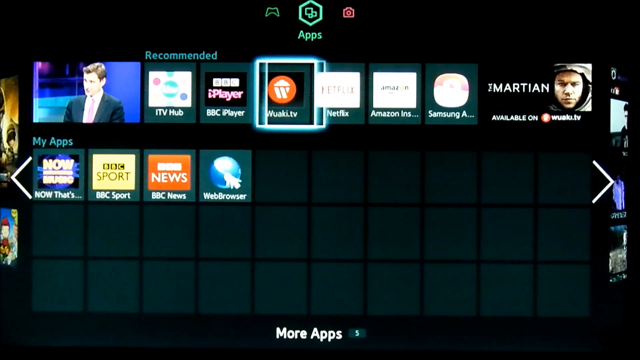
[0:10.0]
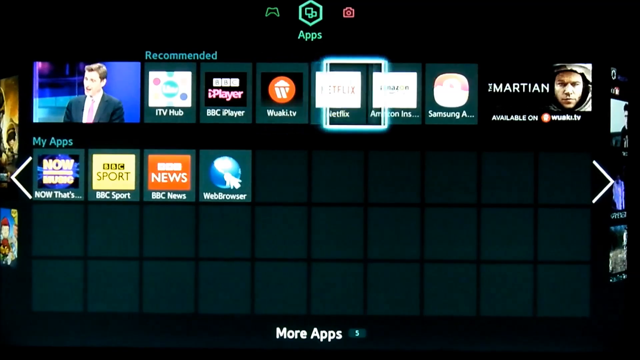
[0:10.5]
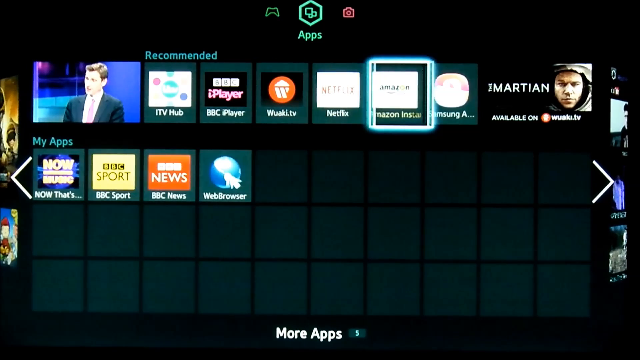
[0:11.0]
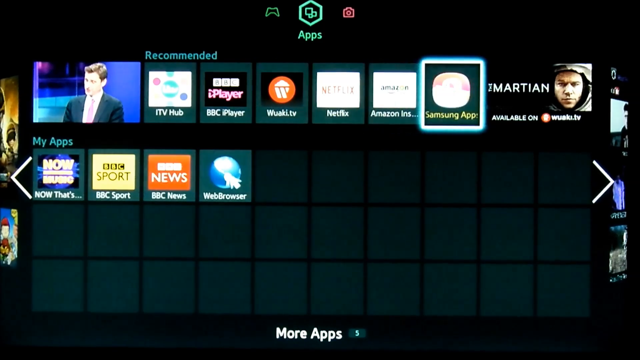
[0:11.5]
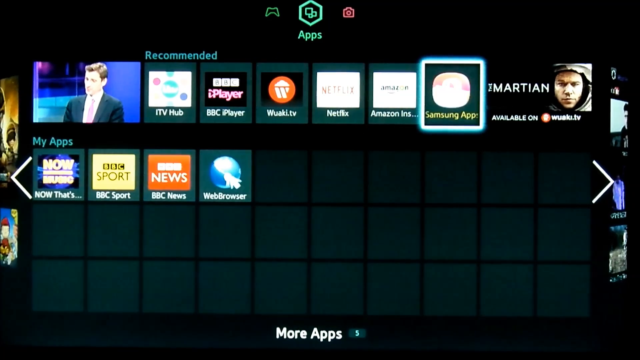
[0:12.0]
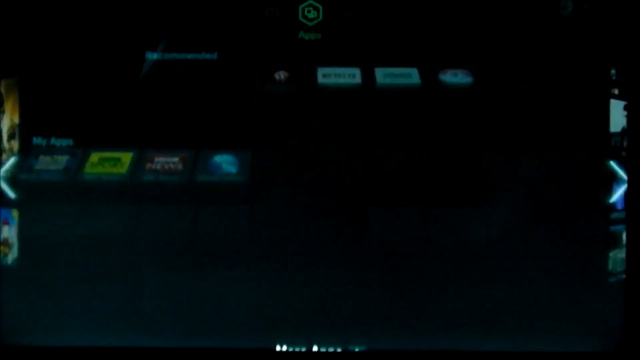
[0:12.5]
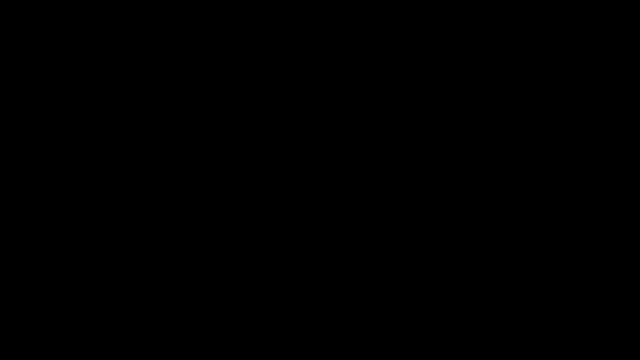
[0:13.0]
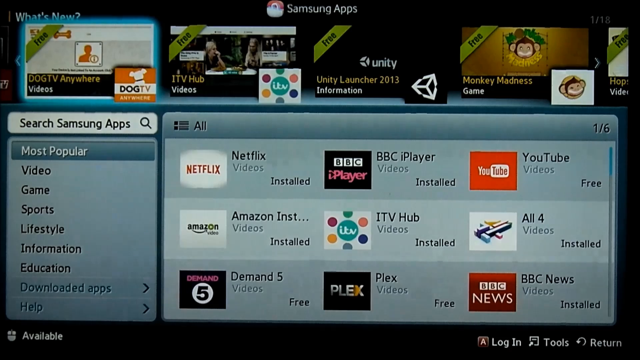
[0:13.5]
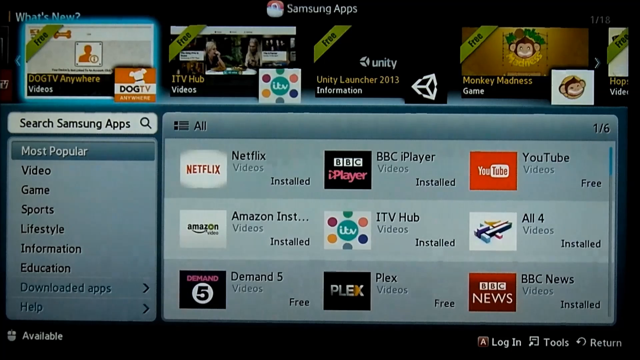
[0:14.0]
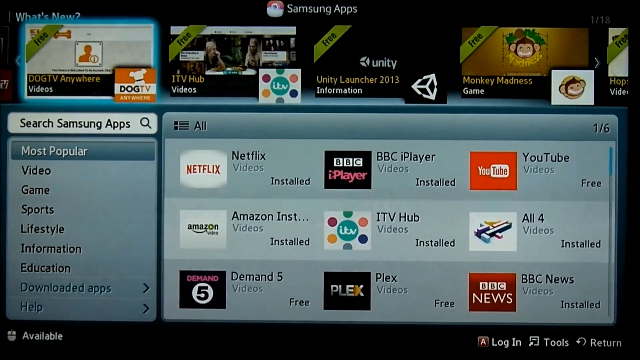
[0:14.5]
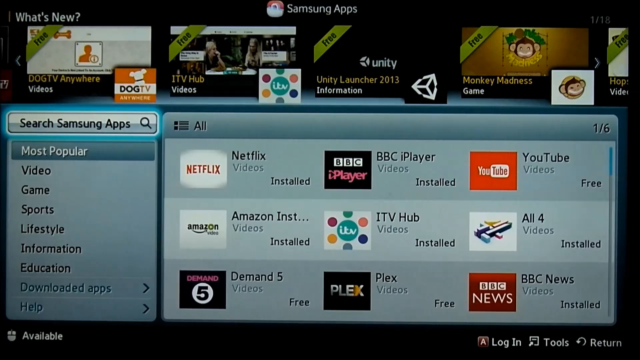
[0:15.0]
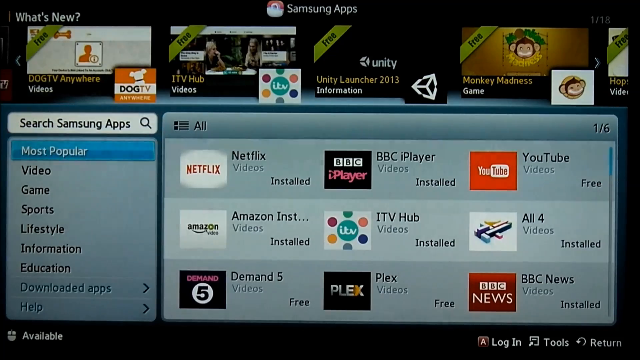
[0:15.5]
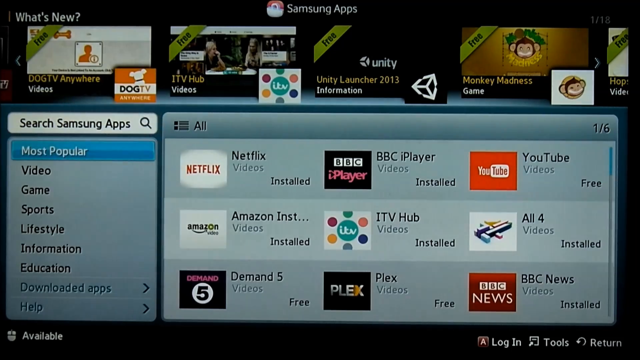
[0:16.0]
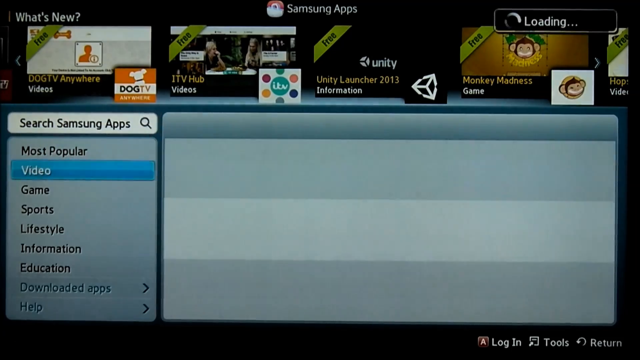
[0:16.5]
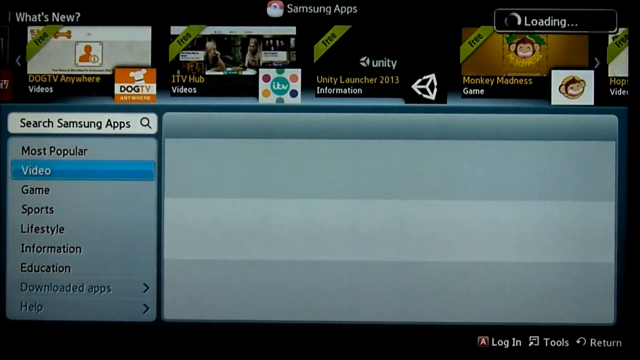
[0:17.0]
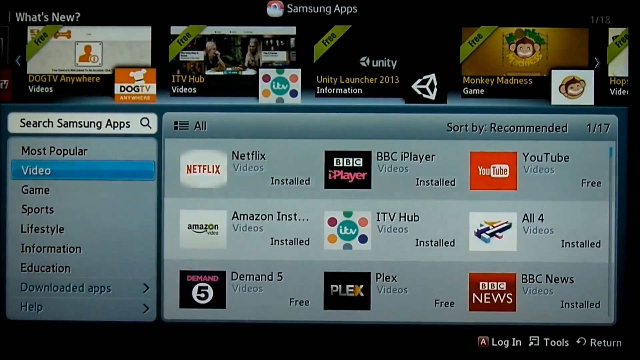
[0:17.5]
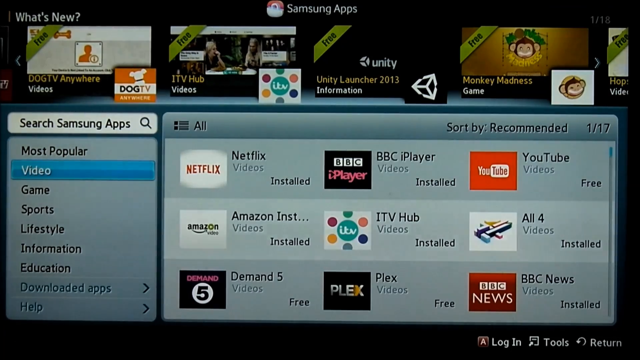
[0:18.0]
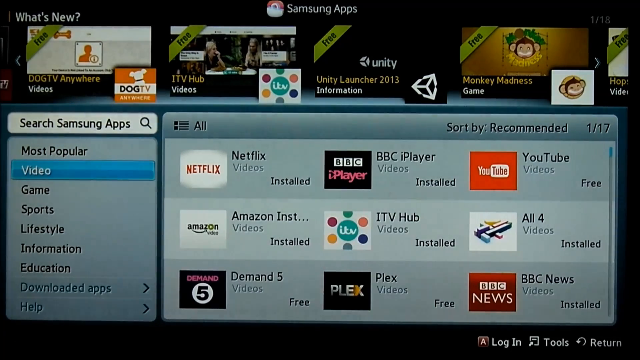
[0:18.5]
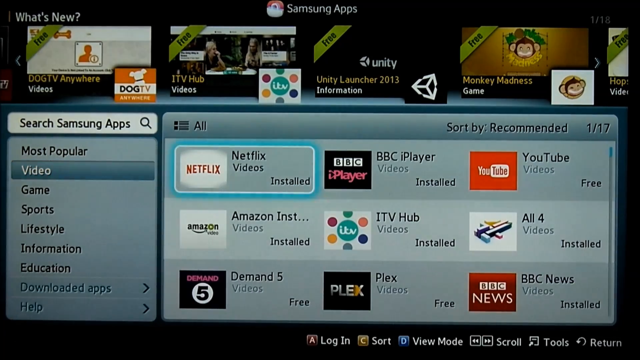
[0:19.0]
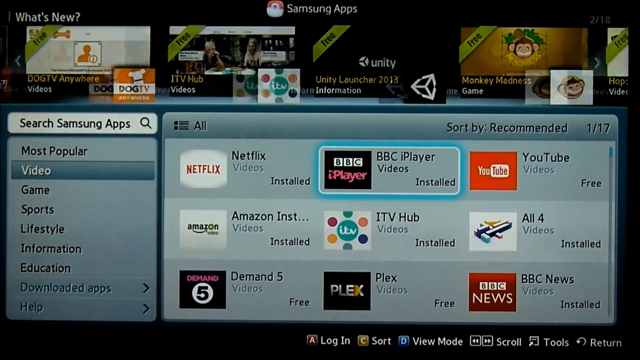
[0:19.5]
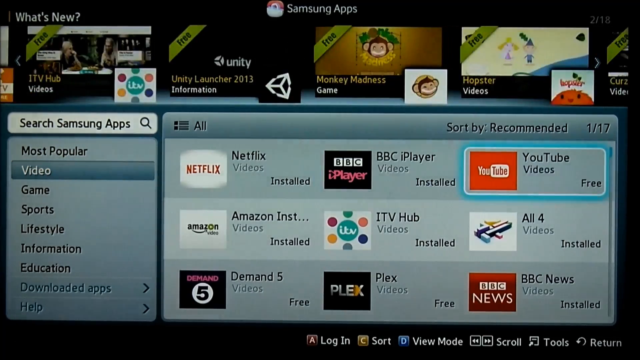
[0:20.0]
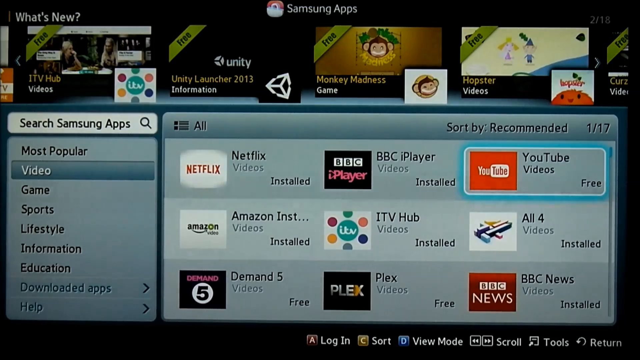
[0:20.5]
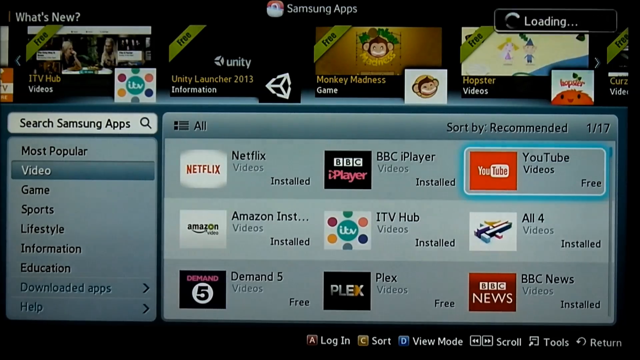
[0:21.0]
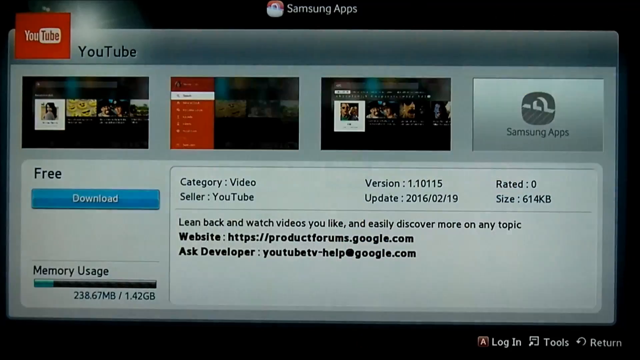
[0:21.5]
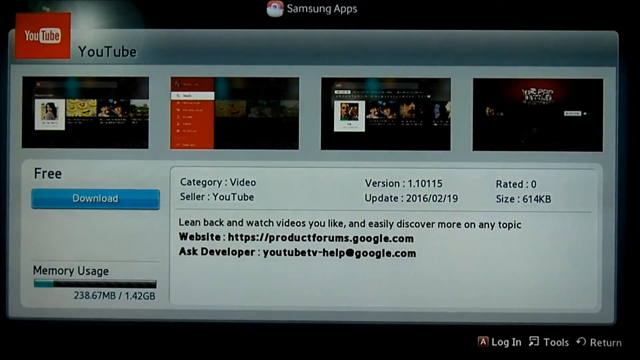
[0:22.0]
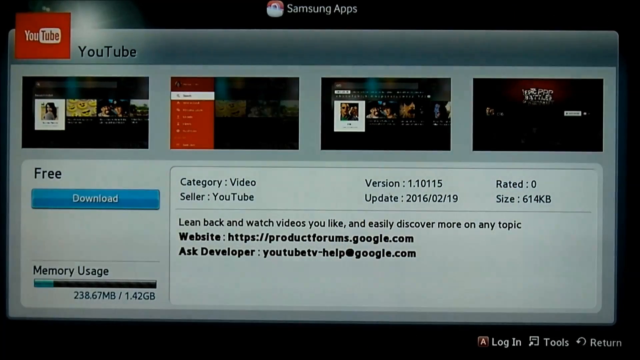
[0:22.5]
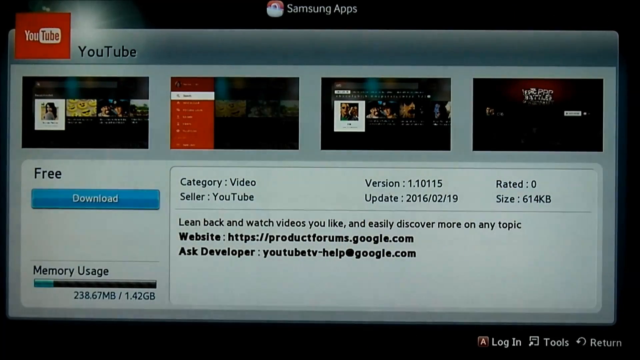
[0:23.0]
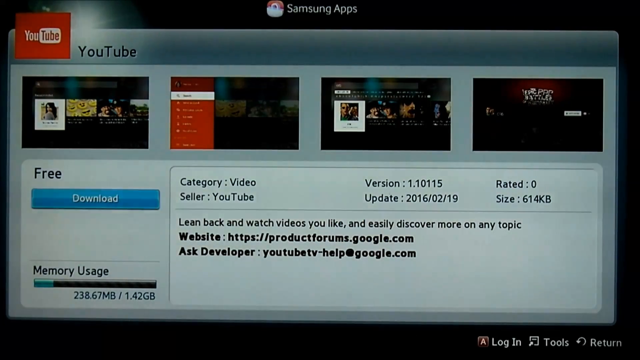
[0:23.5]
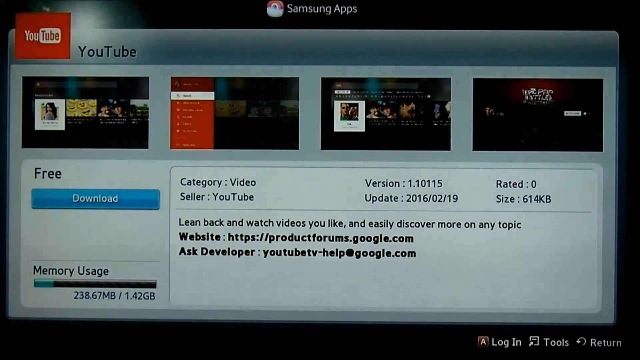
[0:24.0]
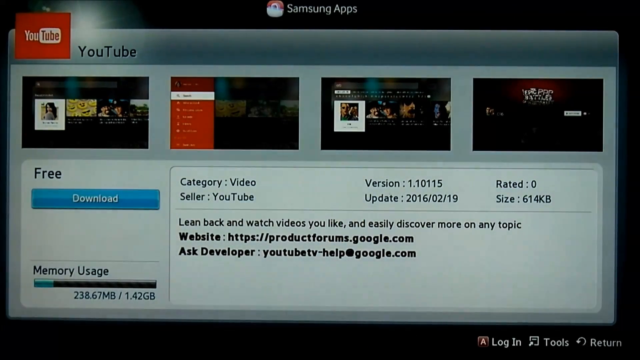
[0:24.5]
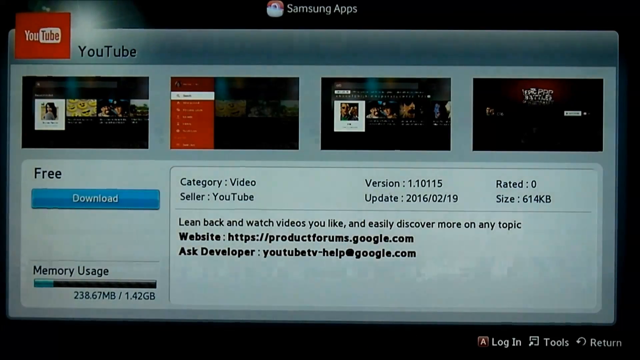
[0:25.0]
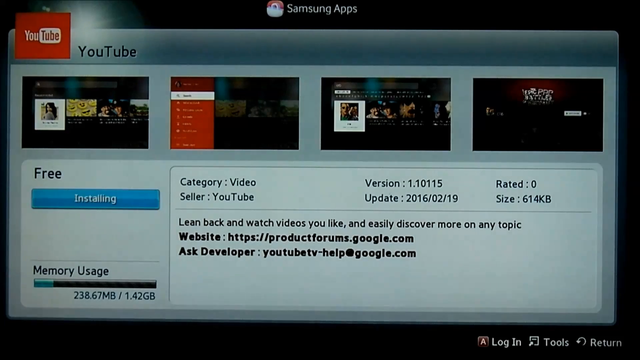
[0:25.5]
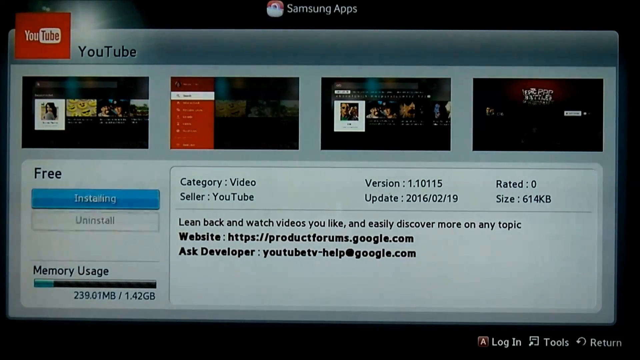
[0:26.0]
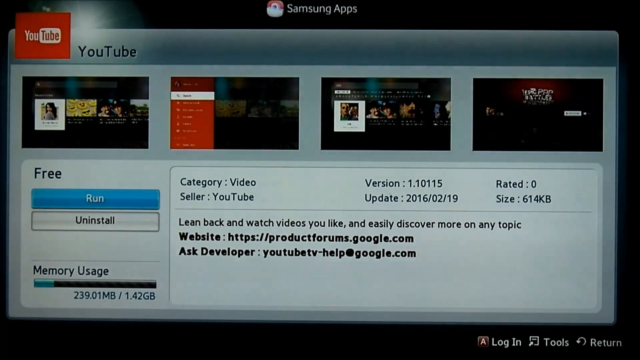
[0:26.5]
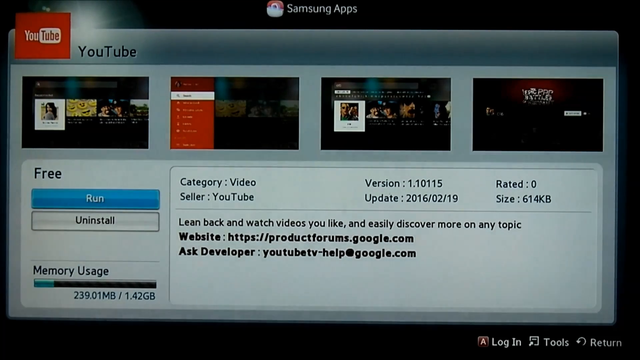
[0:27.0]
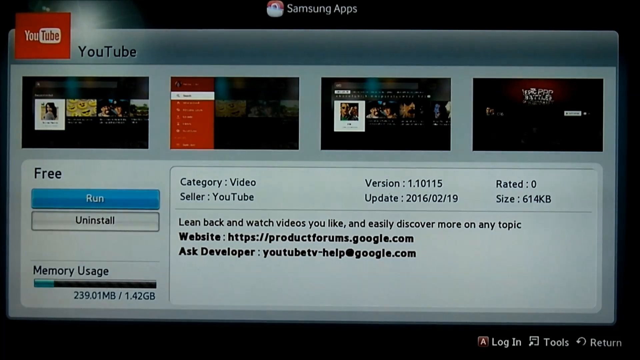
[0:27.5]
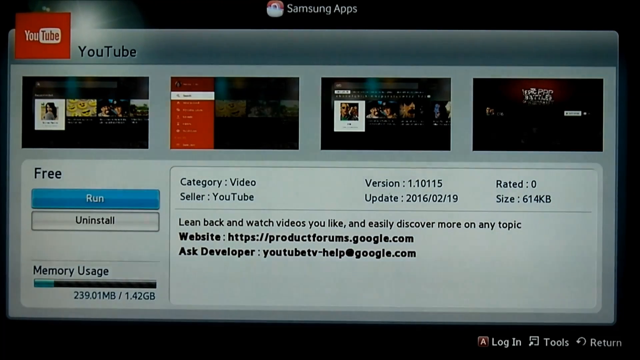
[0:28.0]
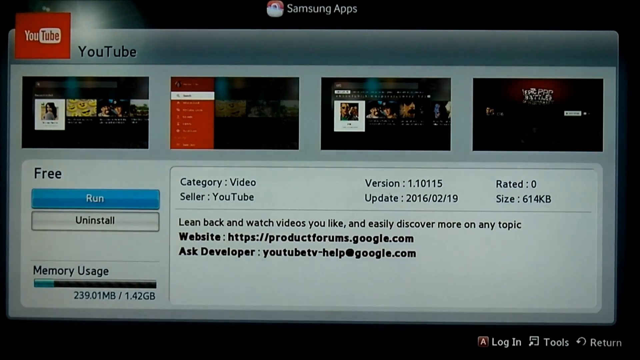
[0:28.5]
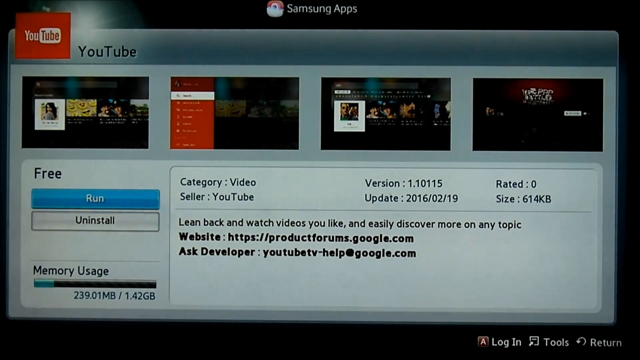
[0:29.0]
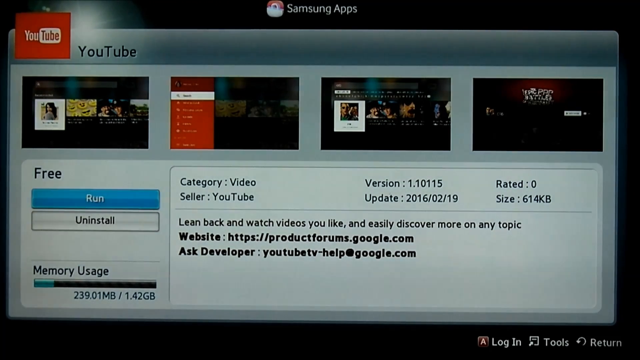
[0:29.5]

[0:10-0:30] A glowing light bluish-white box moves between the squares of the app menu one by one and clicks on the Samsung app, bringing up a new screen. A banner at the top shows various free items, such as a game called Monkey Madness and ITV Hub videos. On the left-hand side are a search box and a menu listing most popular, video, game, sports, lifestyle, information, education, downloaded apps and help. The main part of the screen shows apps, and it is page 106: Netflix, ITV Hub, YouTube and others, some marked as installed and some marked free, presumably meaning not yet installed. The YouTube icon is clicked, opening the download screen. The download button is clicked and changes to read installing, after which a blue button reading run and a grey button reading uninstall appear.